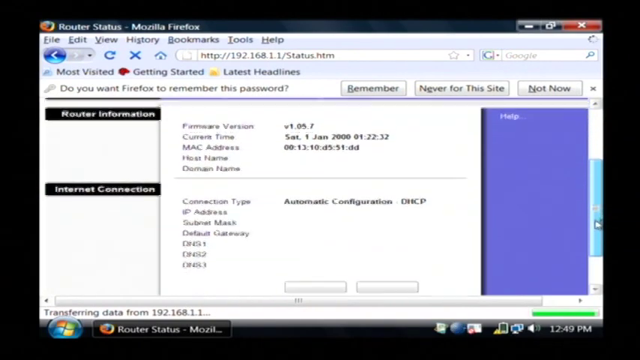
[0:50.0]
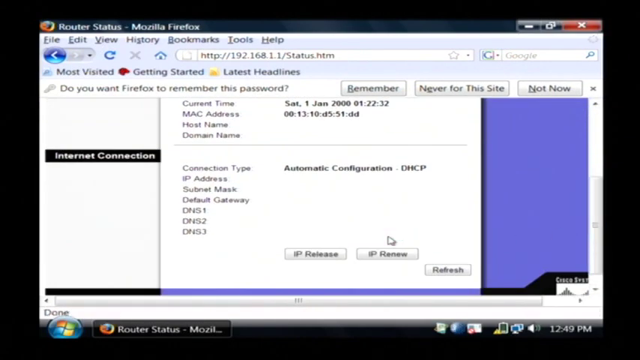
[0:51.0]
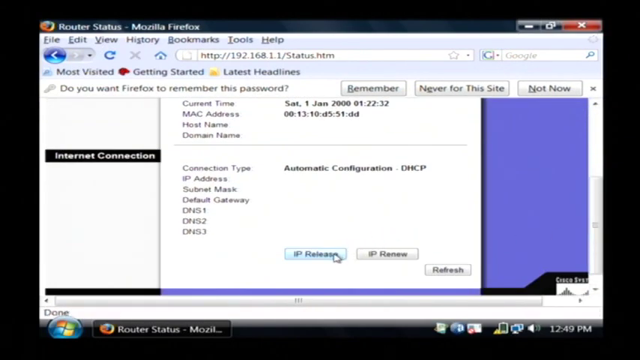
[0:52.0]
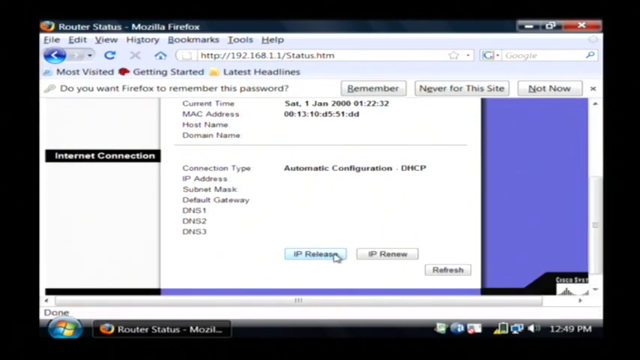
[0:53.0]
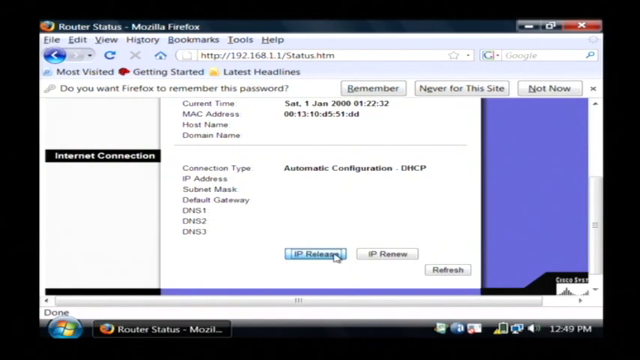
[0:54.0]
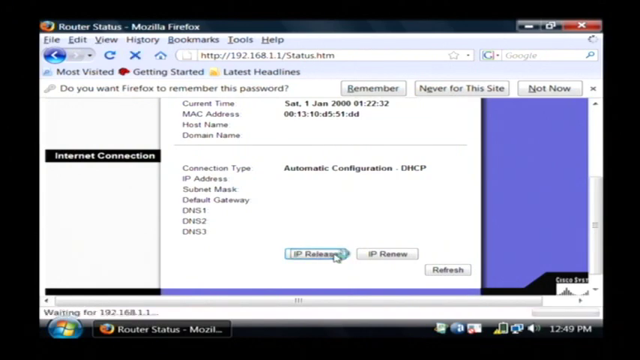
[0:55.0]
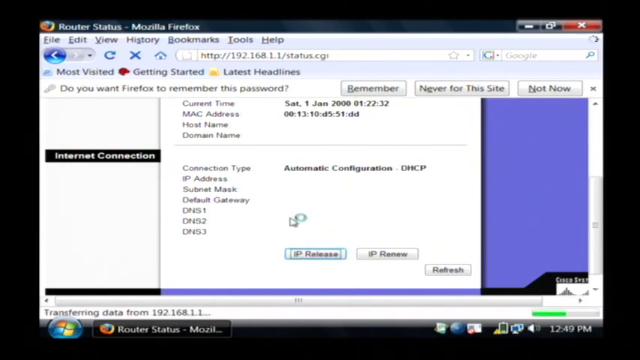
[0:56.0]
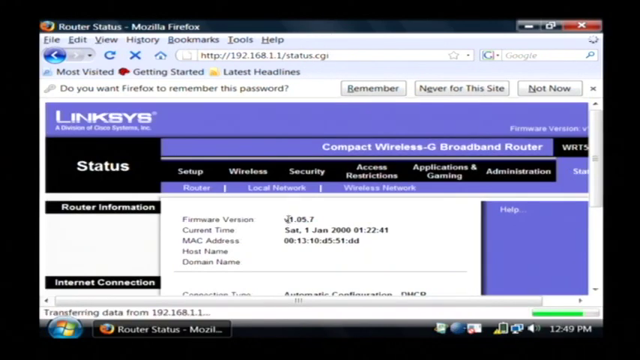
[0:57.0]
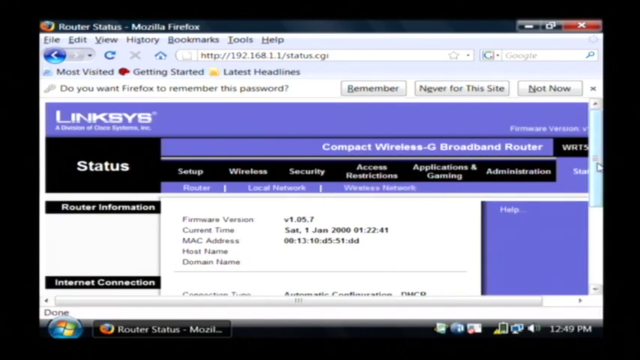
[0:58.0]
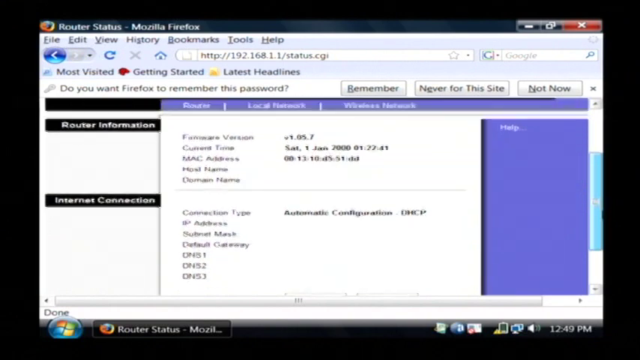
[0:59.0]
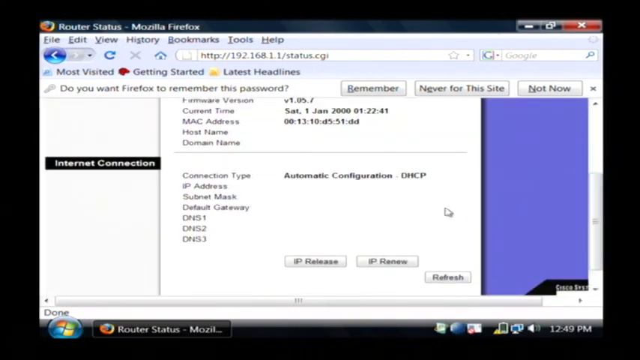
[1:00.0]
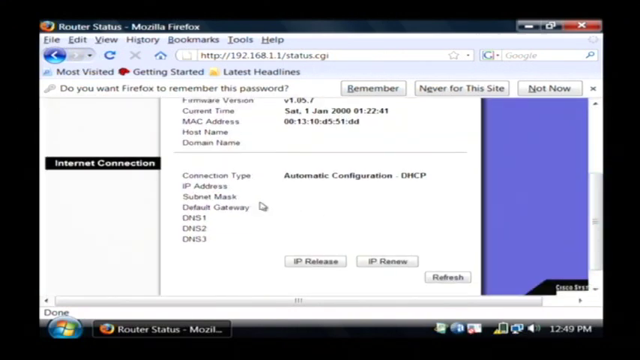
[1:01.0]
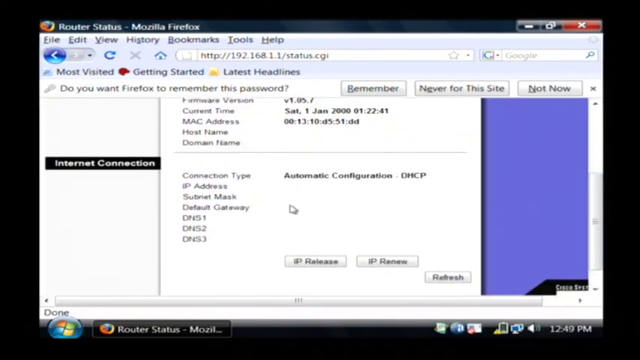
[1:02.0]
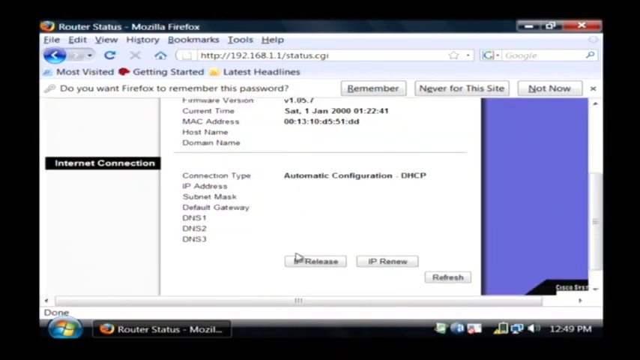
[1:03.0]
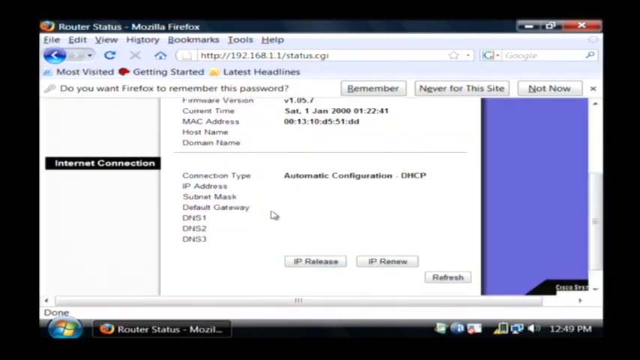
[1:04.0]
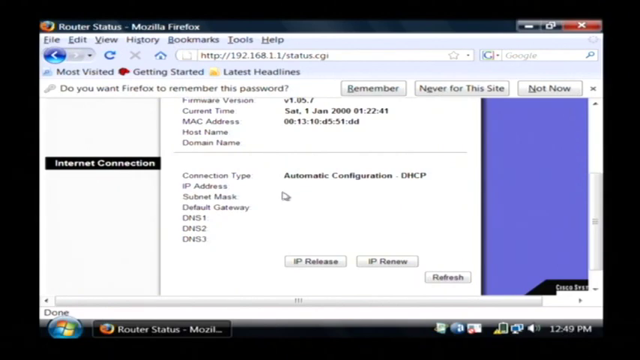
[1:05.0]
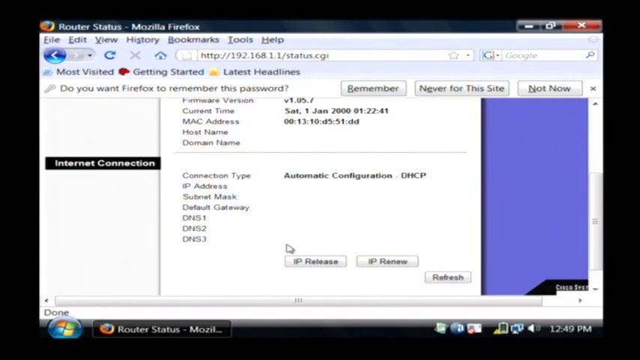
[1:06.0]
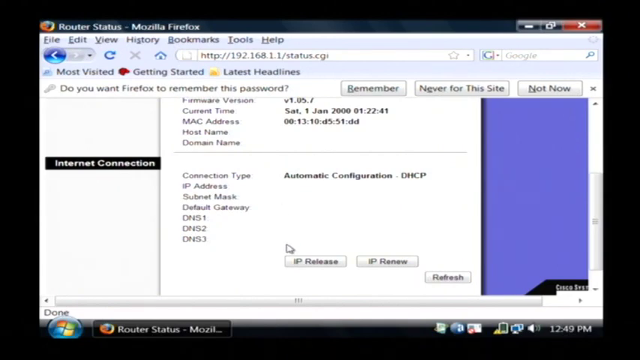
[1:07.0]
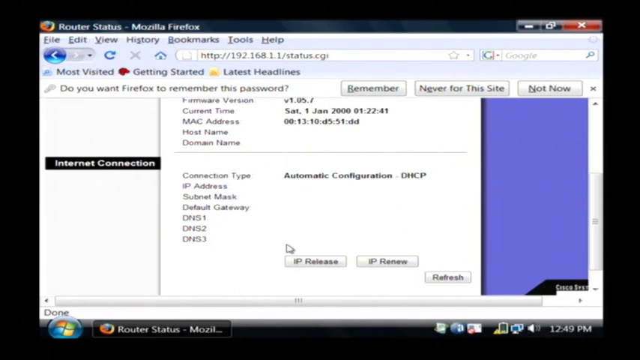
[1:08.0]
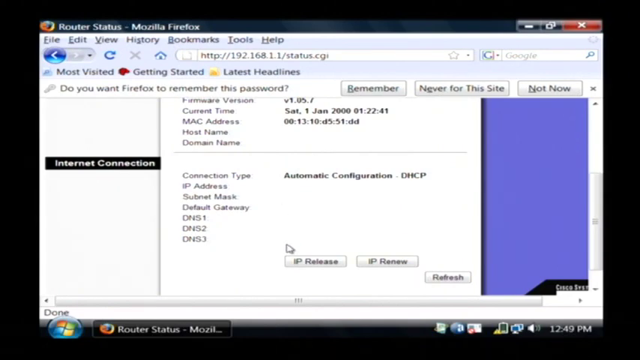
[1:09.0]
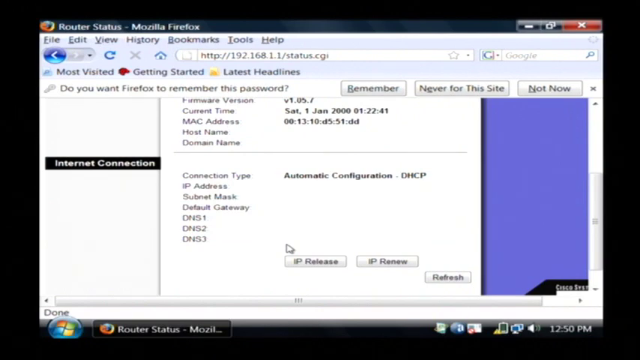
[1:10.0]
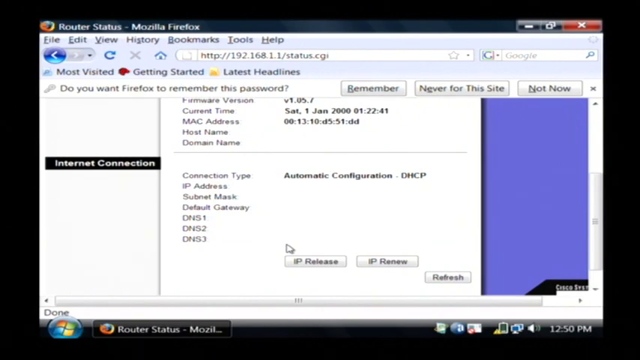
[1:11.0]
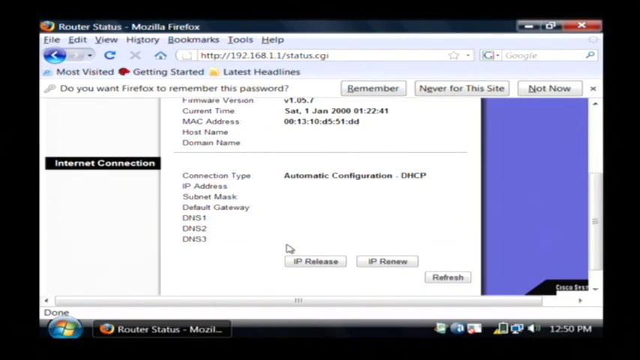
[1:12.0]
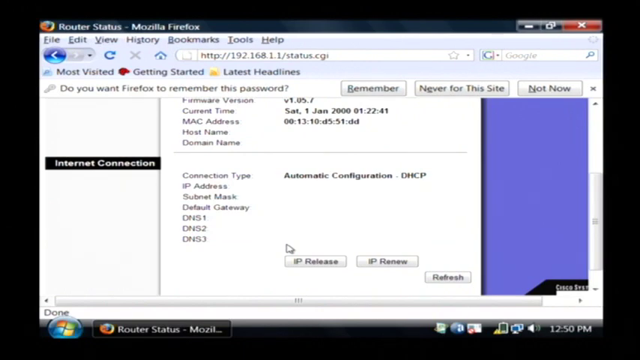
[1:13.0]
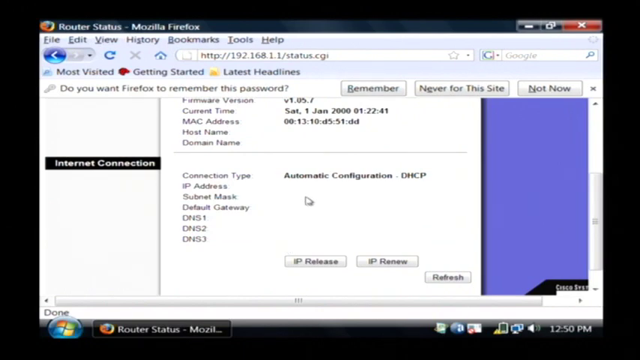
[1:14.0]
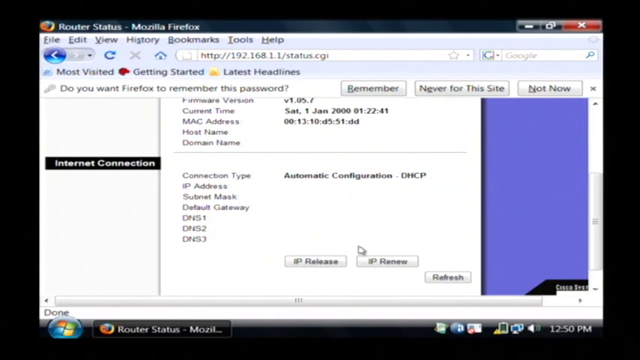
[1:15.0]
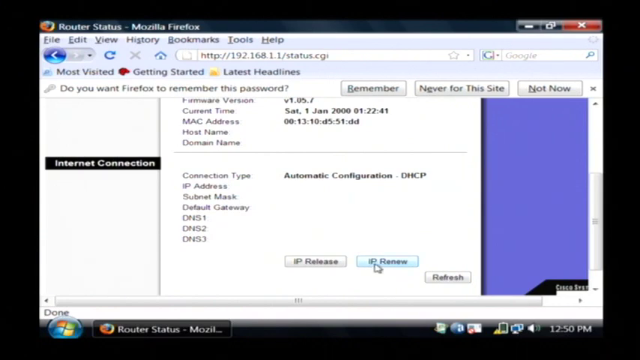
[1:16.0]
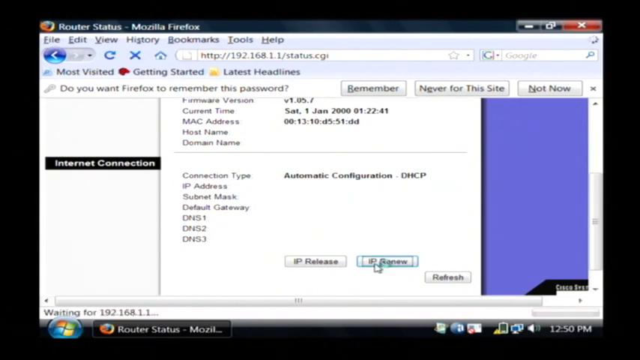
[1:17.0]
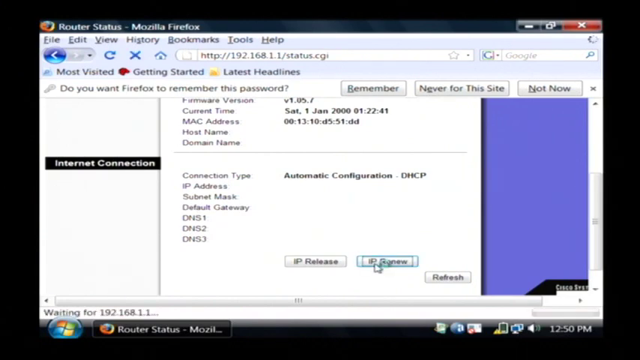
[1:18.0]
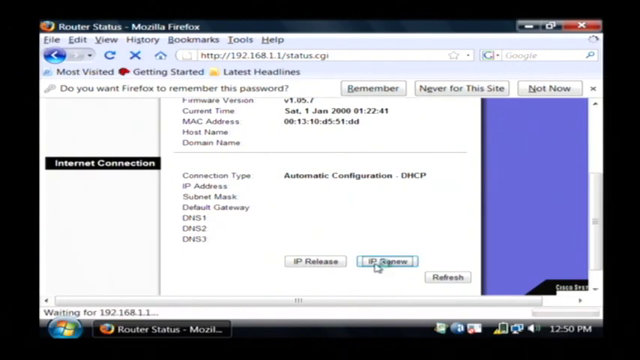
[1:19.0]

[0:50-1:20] The cursor is on top of a button that appears to be at the bottom middle of the screen, labeled "release." The cursor hovers over the button and then clicks it. Beside the cursor, the blue circle appears to move around in a circle, indicating the page is loading. The new page appears, and he moves the cursor to the bar on the right-hand side of the display and moves it downwards. He moves the cursor to the center of the display, where there is some text, then drags it to the release button, hovering briefly so that it turns blue. He moves the cursor back up into some white space, then drags it back down so that it is stationary on top of the release button. He moves the cursor up a little into the white space again and then drags it down to the renew button and hovers over it.